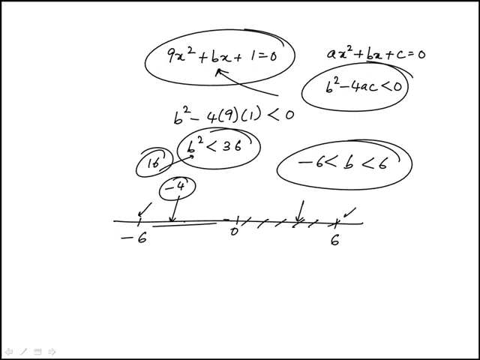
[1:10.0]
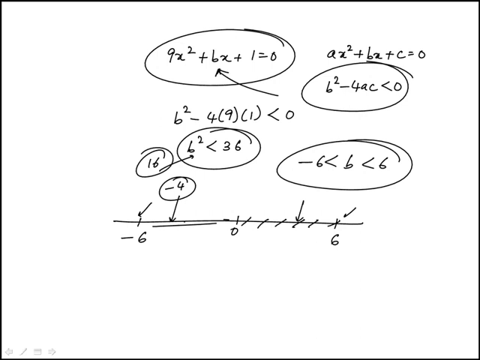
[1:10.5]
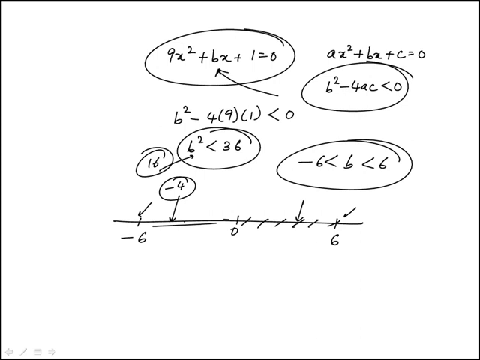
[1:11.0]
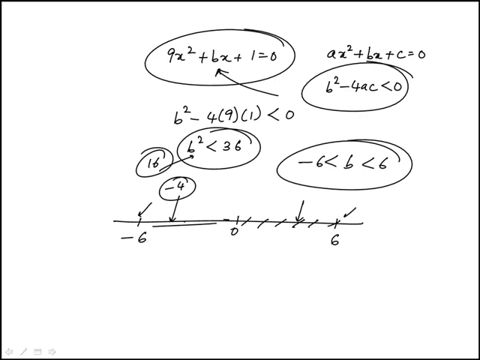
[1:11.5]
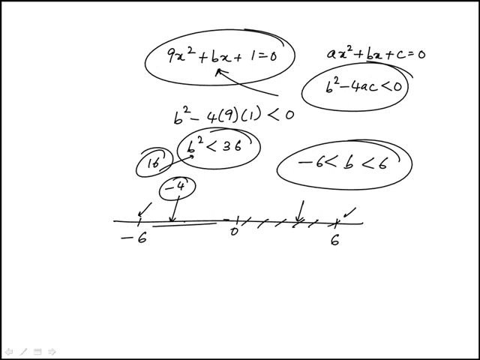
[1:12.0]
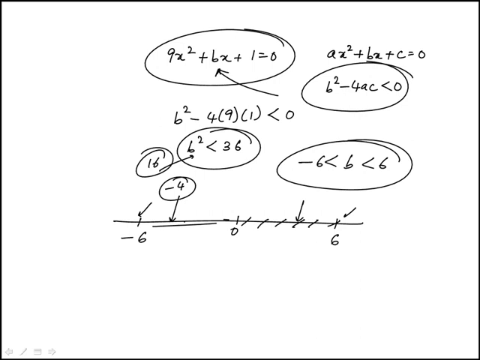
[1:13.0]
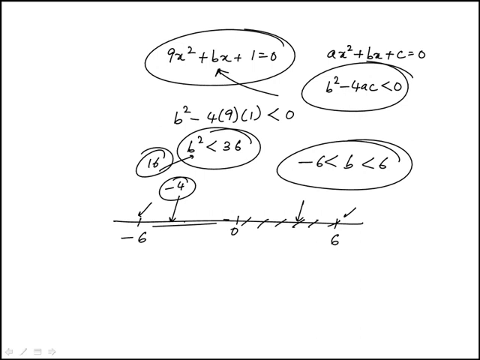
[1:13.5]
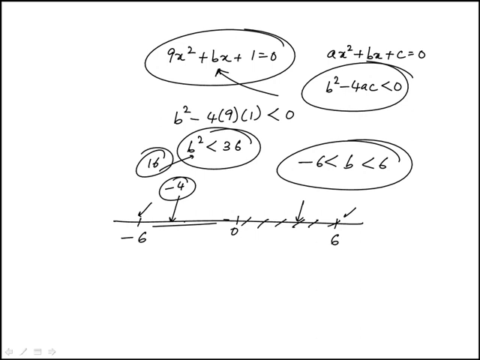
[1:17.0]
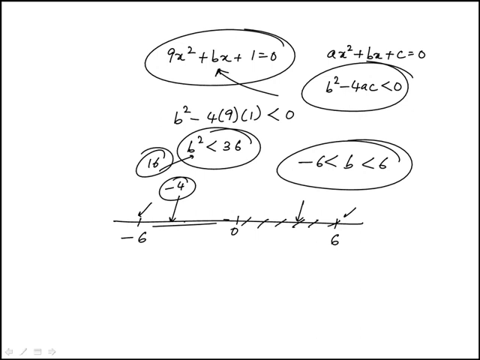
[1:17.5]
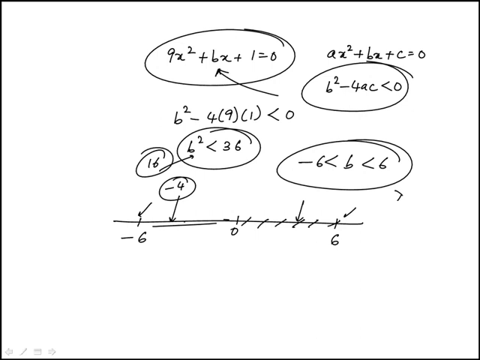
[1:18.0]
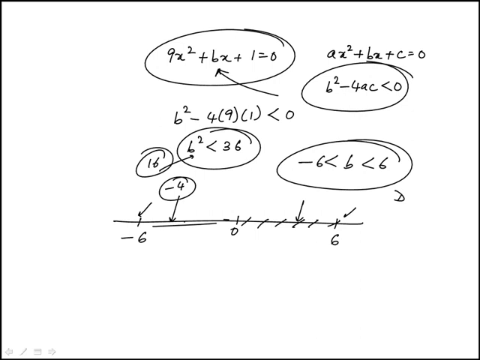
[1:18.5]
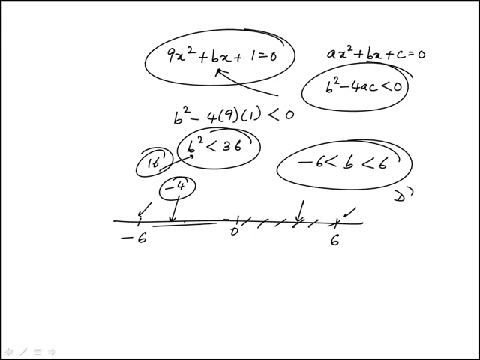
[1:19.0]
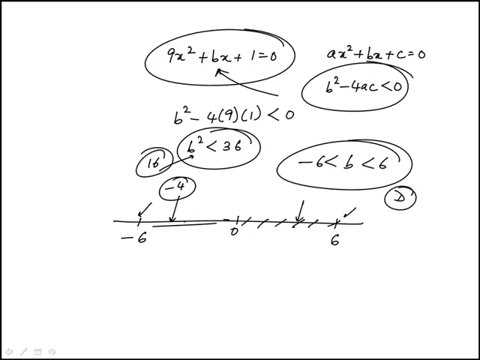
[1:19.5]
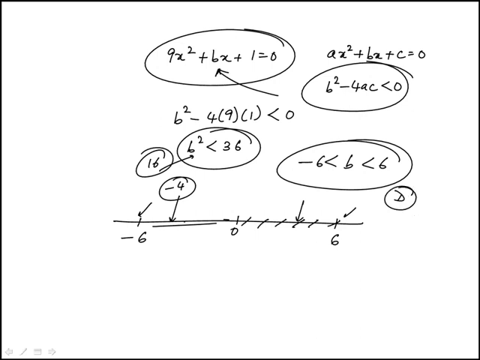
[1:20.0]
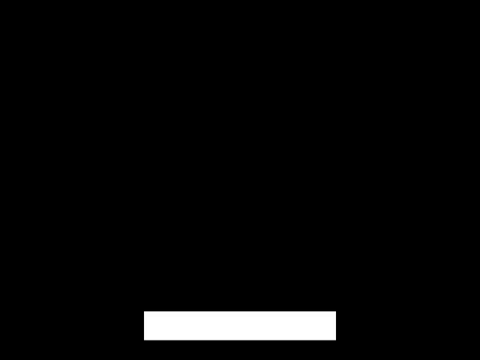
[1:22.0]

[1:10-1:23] The page holds six equations, a line graph and other circled digits; two of the six equations are not circled and the rest are circled. On the line graph, a new point mark or arrow appears at zero, with four strikes after zero. A d is written at the corner of the equation negative 6 is greater than b is greater than 6, and below it there is a circled letter d.